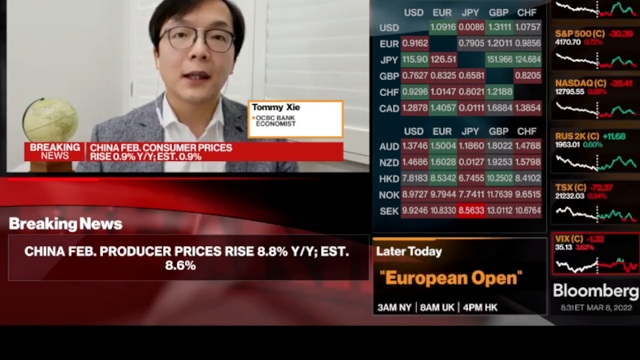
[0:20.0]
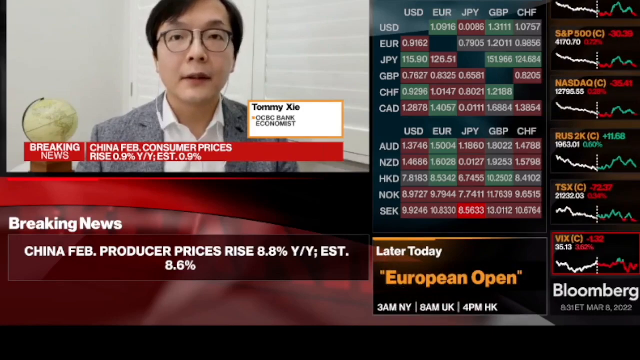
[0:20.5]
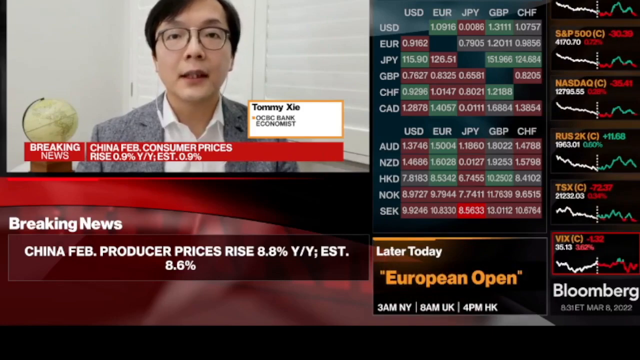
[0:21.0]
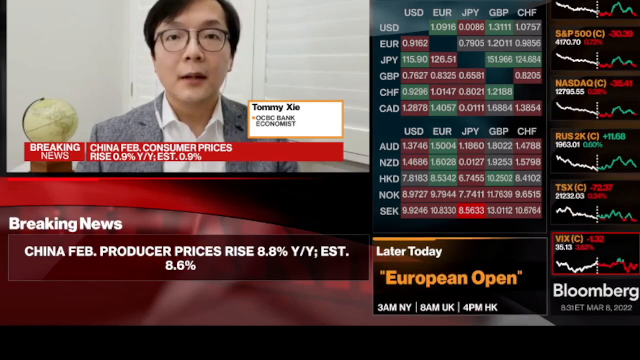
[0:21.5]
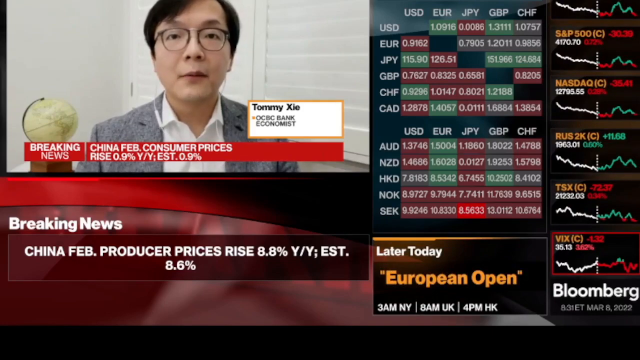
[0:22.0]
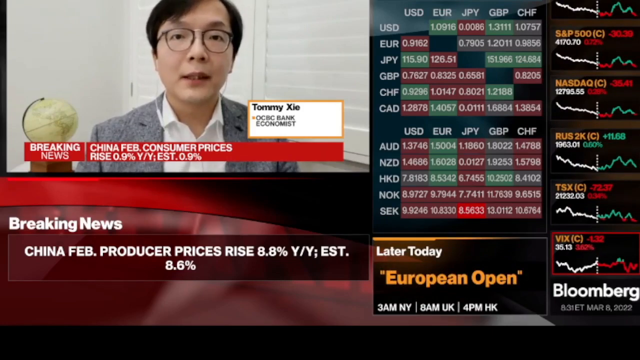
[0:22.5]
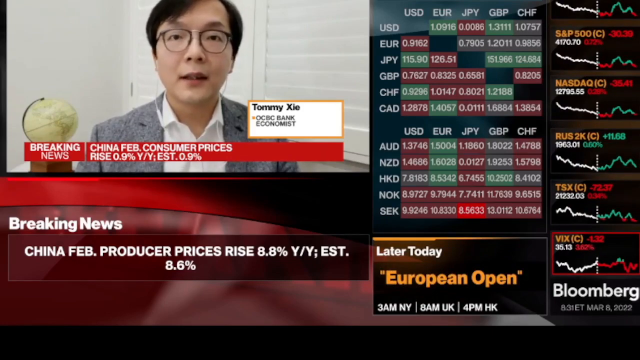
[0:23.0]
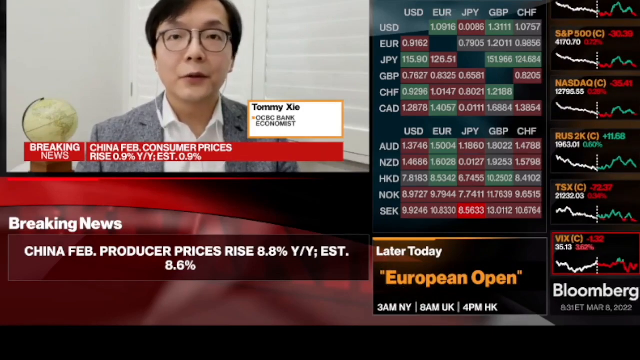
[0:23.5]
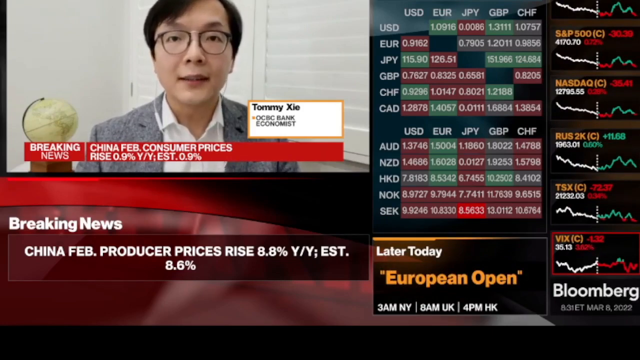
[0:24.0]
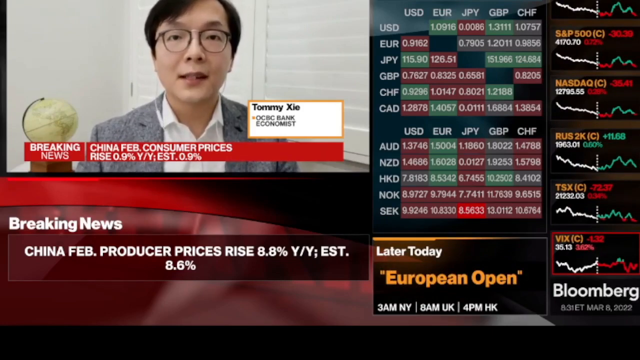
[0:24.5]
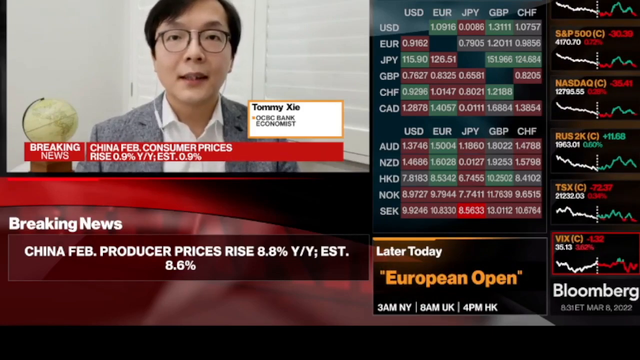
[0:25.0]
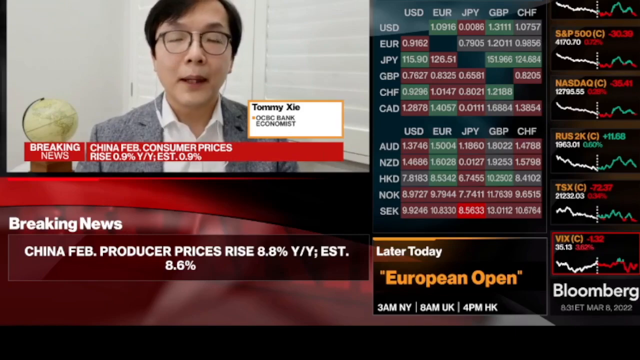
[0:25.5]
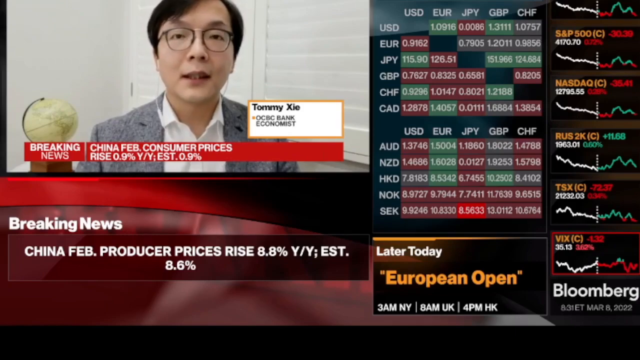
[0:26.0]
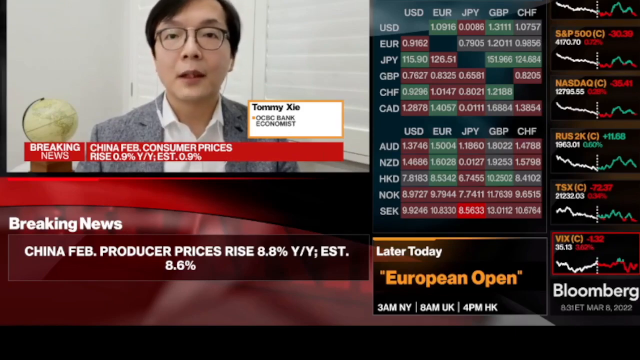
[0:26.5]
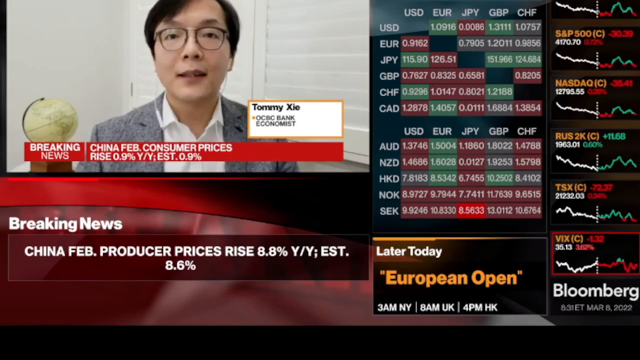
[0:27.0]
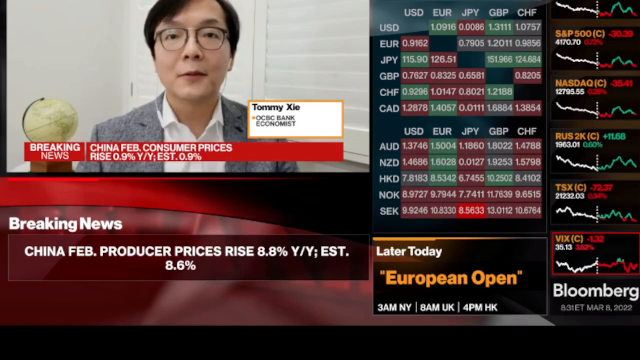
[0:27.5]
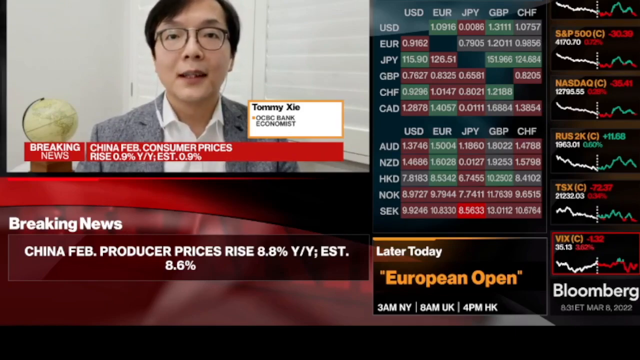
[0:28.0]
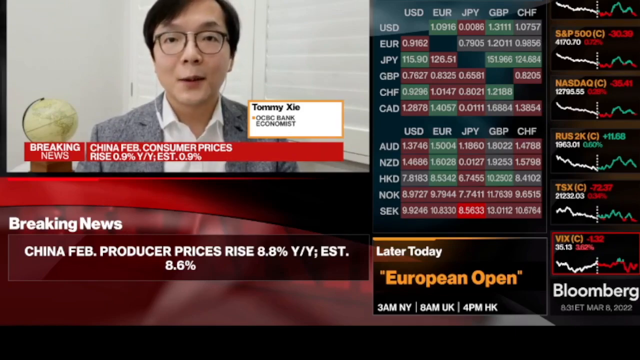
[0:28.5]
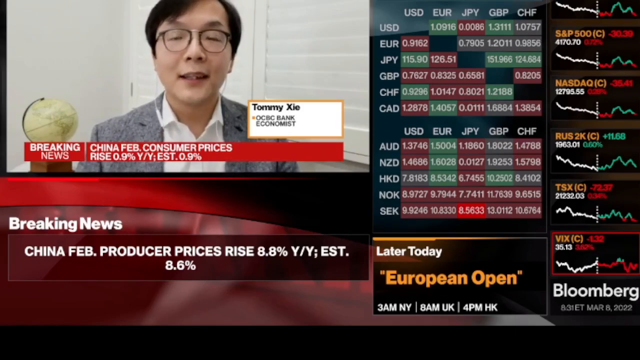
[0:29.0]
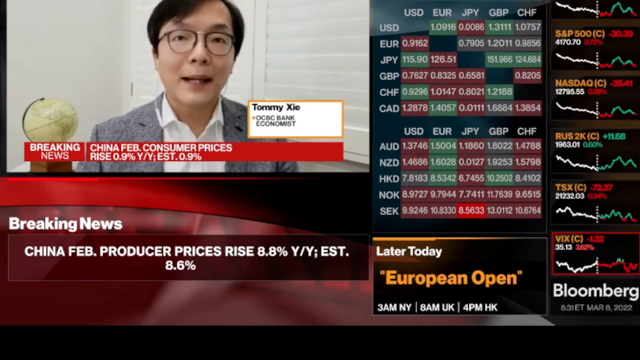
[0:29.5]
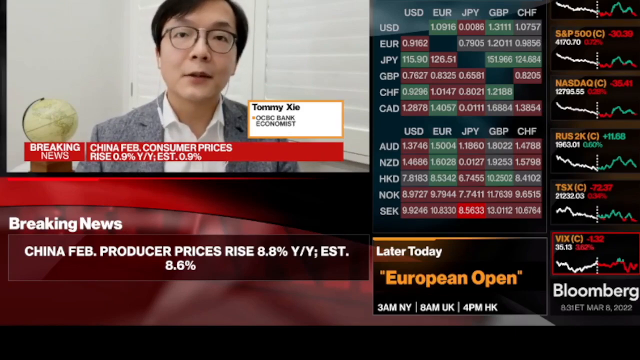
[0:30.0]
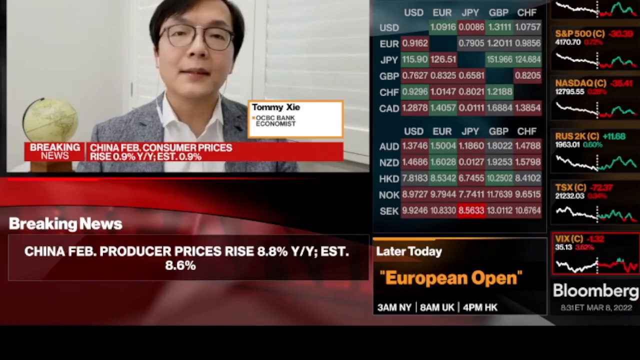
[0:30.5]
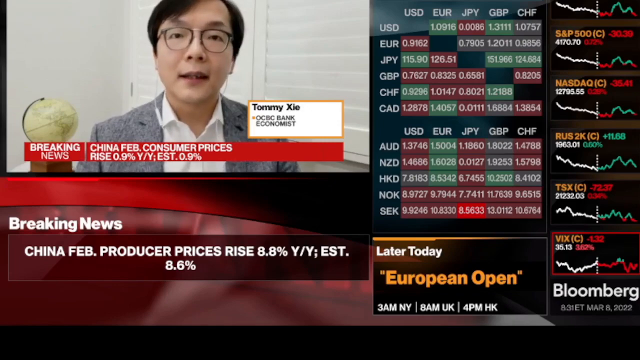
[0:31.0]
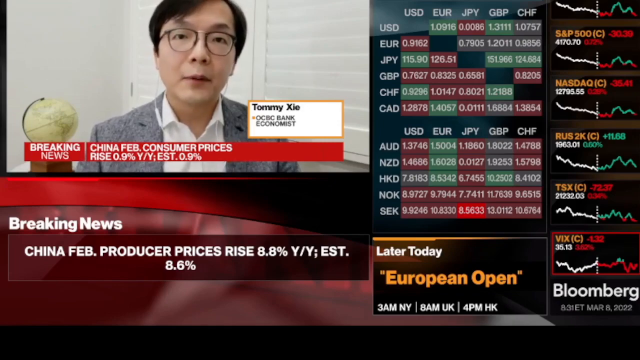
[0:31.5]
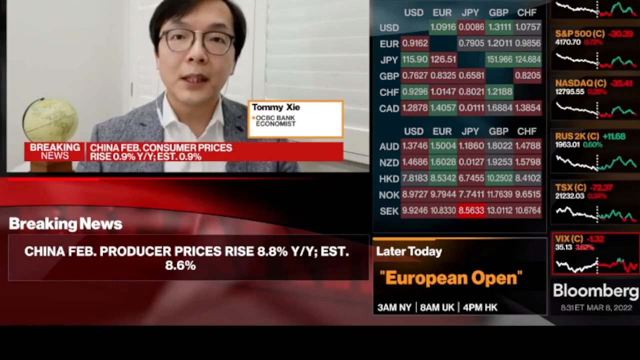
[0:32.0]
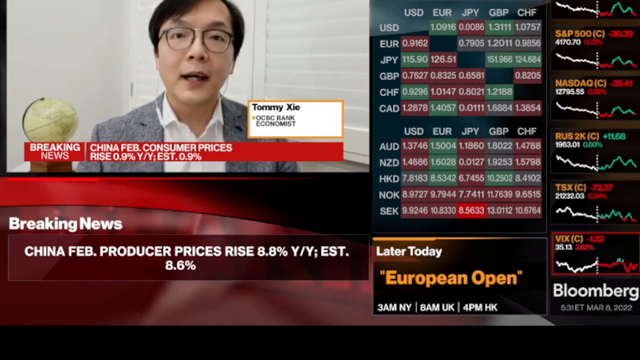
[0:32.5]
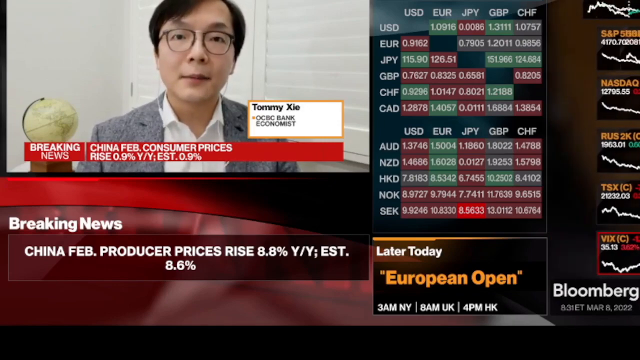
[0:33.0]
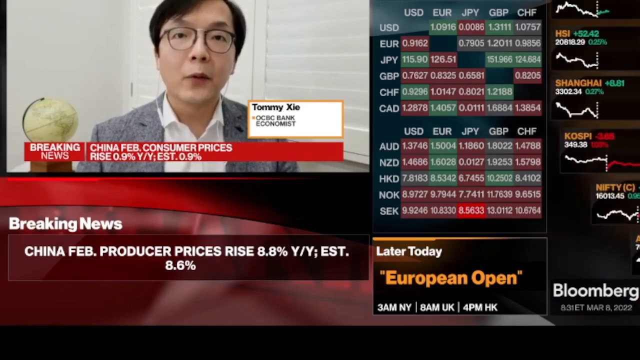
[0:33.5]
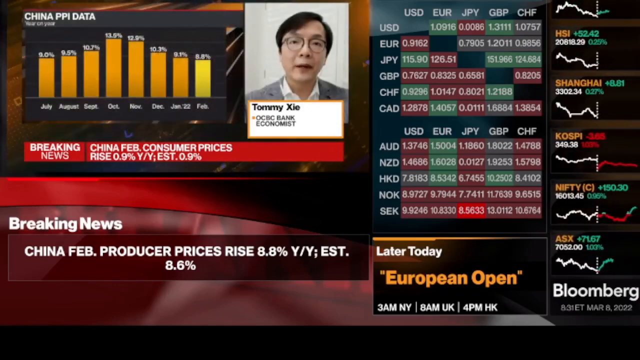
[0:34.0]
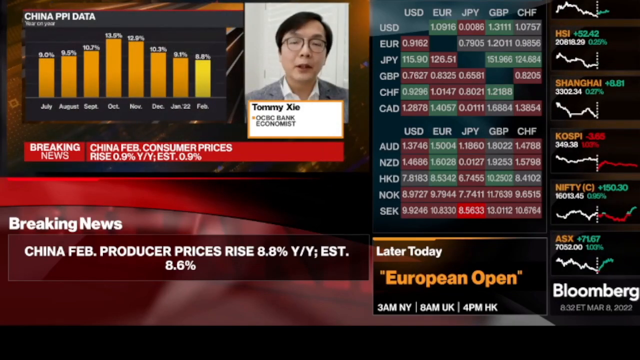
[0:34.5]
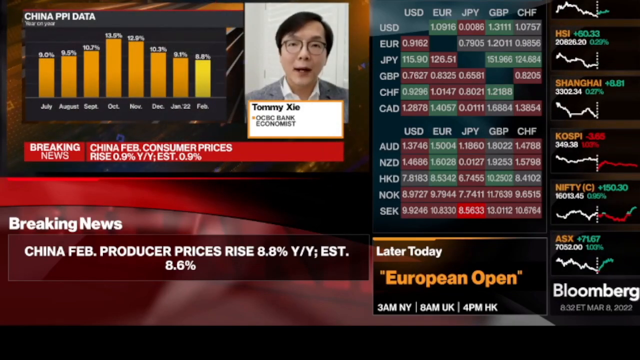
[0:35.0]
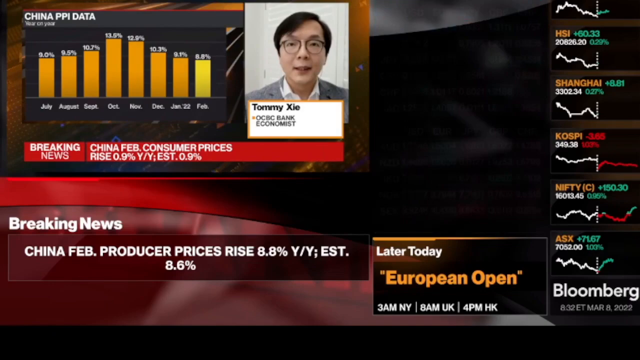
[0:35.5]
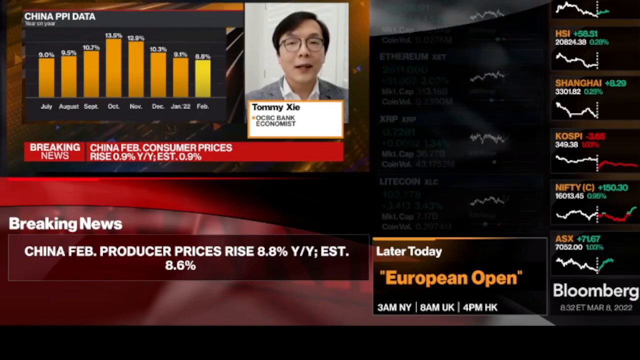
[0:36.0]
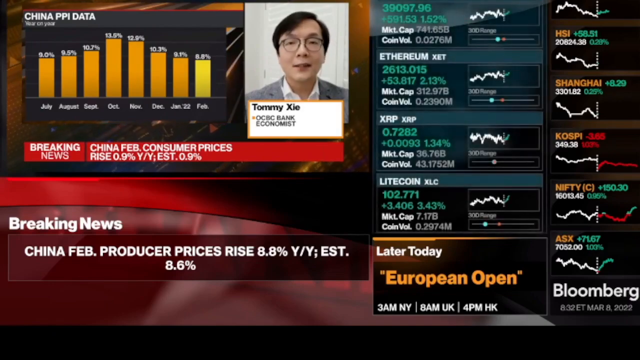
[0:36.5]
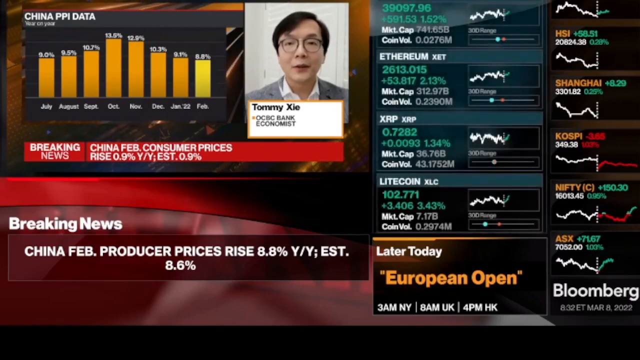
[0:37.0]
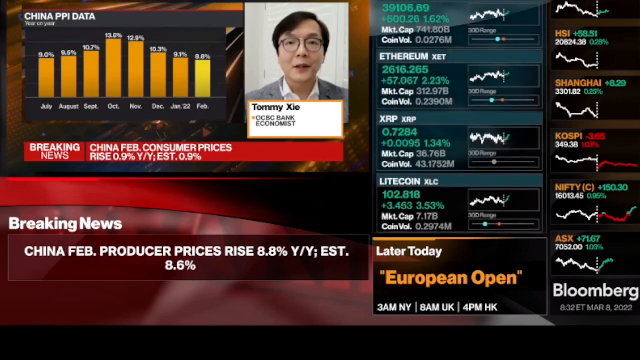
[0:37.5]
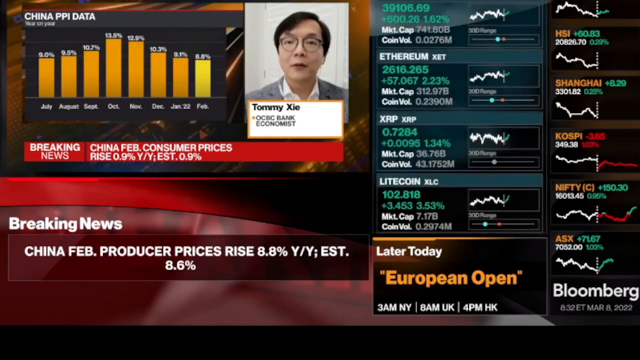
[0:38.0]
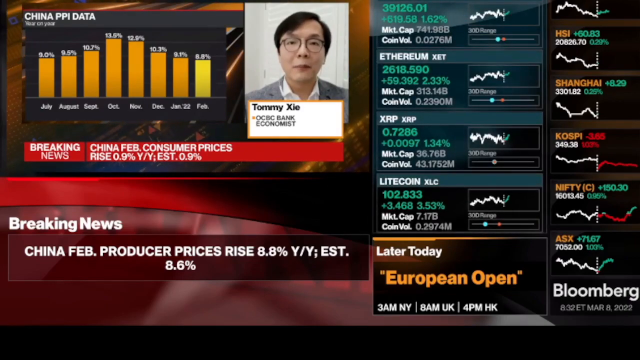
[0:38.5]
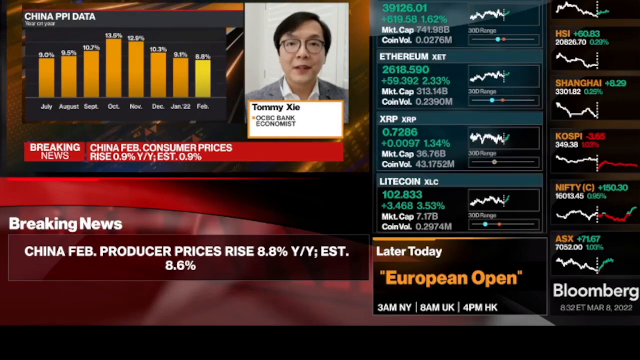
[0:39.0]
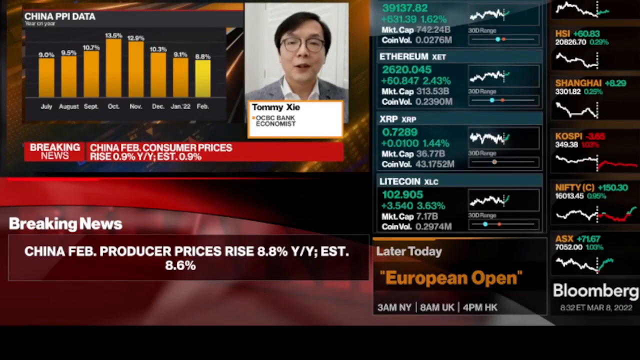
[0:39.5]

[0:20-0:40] A new program appears on the bottom right of the currency chart, stating that European Open is on later today, with its start times in New York, the UK and Hong Kong. Tommy Xai continues talking in the top left corner. Behind him is a globe that seems to be on a side table, and there are closed white blinds. Tommy then pulls up a chart labeled "China PPI Data," a bar graph with percentages at the top of the bars running from July 2021 to February 2022. The highest value is in October at 13.5 percent and the lowest is February at 8.8 percent. The name and credentials of the host of European Open and its start times in different time zones are then shown on the screen.